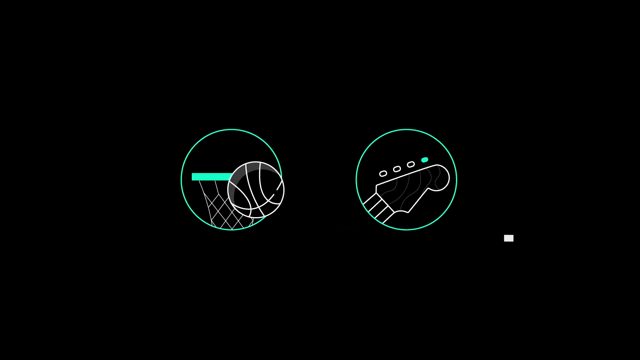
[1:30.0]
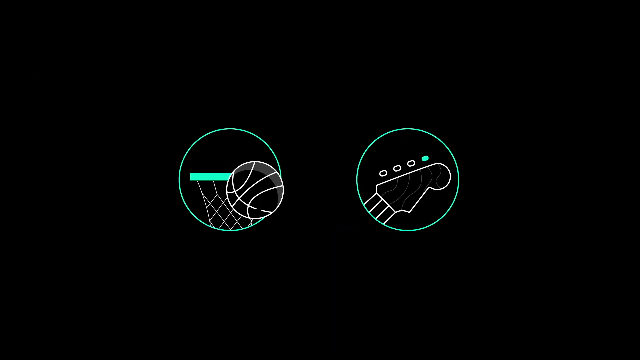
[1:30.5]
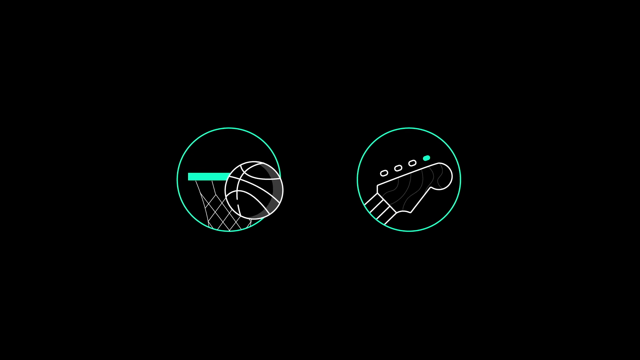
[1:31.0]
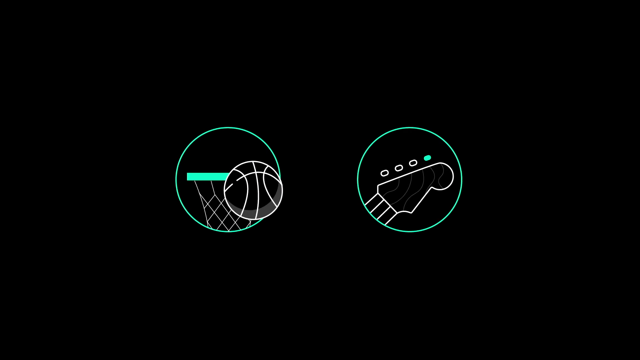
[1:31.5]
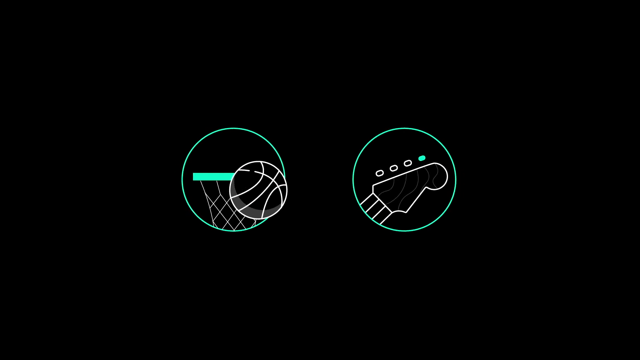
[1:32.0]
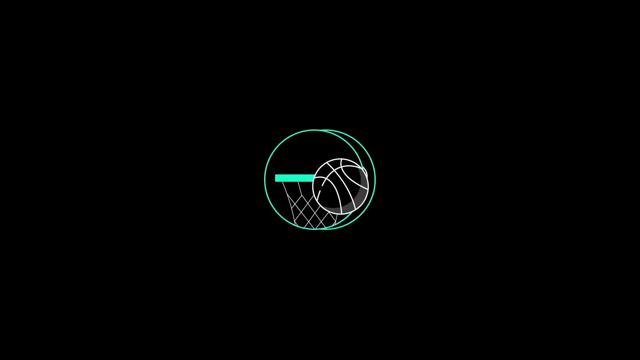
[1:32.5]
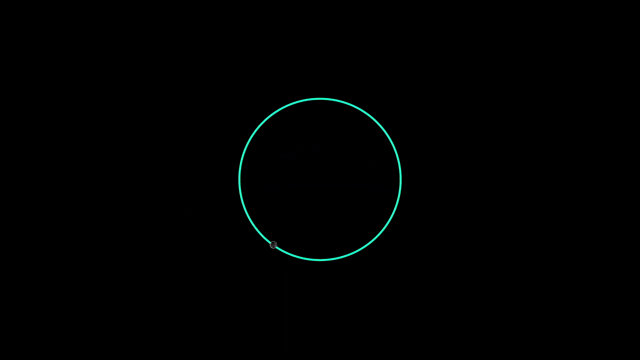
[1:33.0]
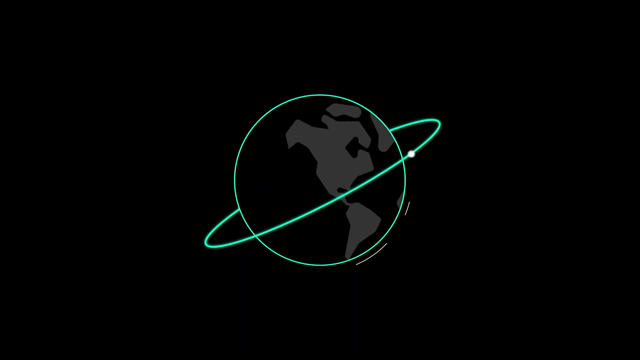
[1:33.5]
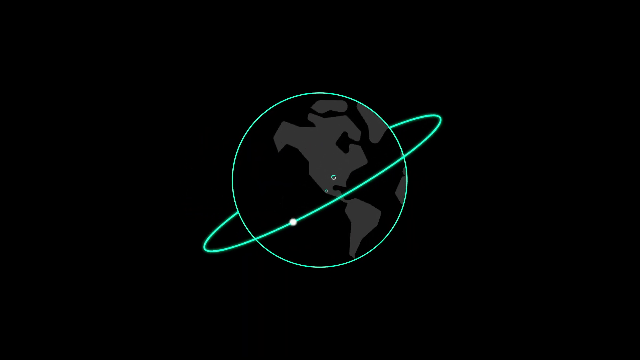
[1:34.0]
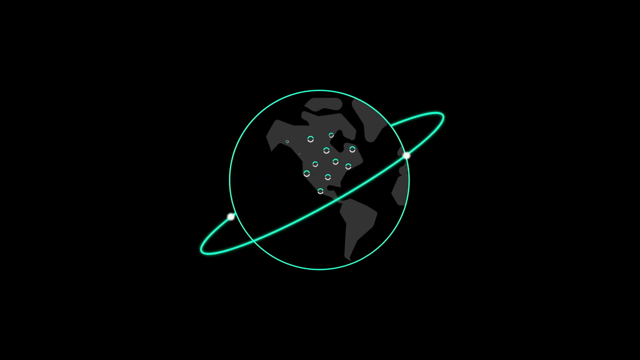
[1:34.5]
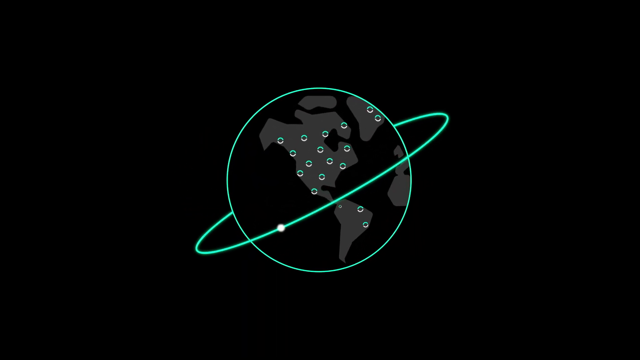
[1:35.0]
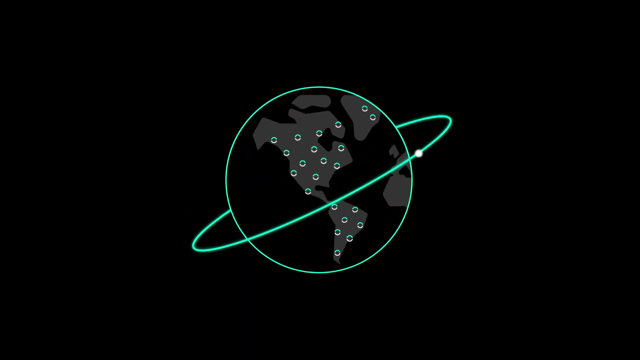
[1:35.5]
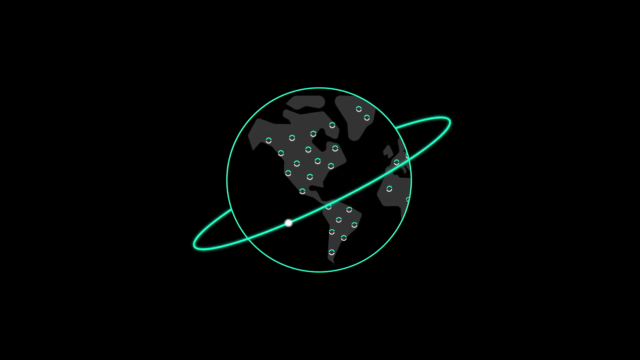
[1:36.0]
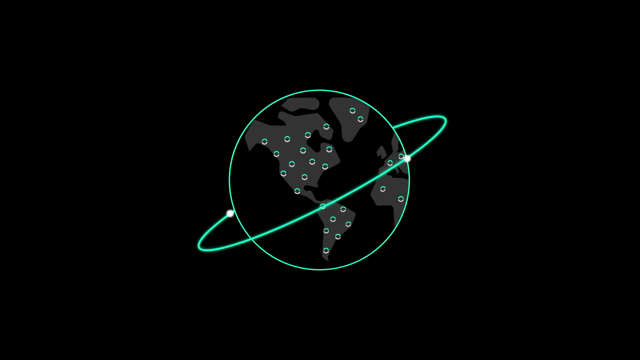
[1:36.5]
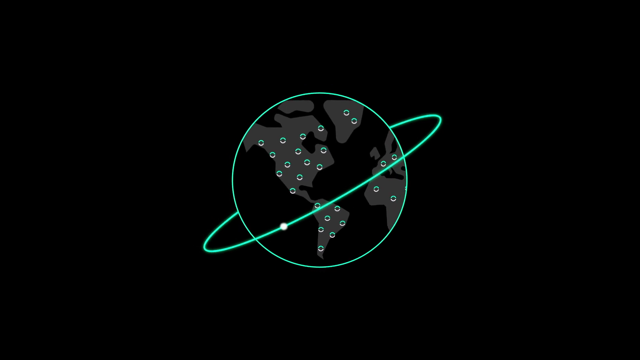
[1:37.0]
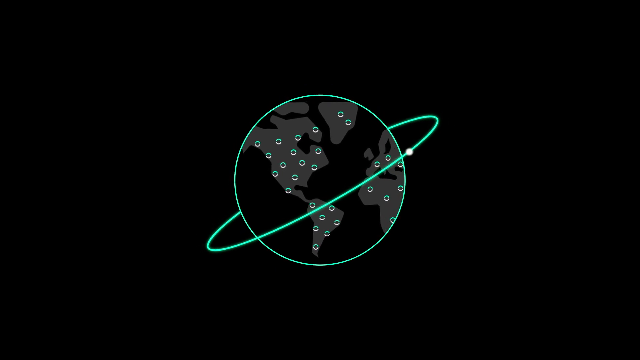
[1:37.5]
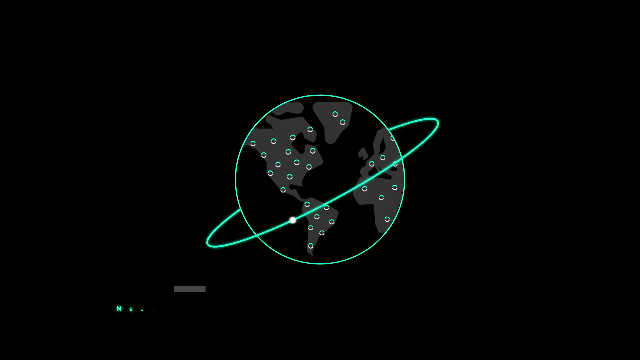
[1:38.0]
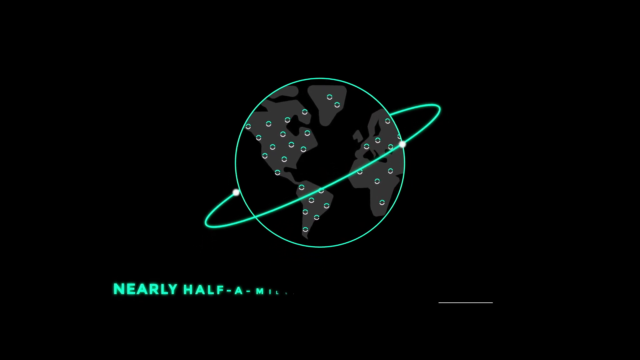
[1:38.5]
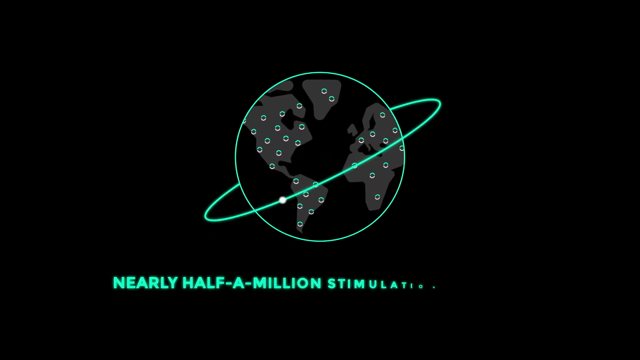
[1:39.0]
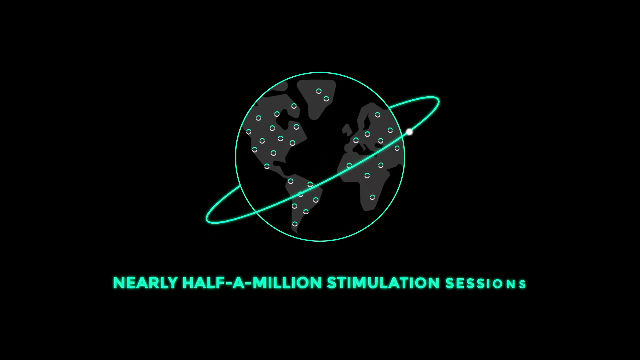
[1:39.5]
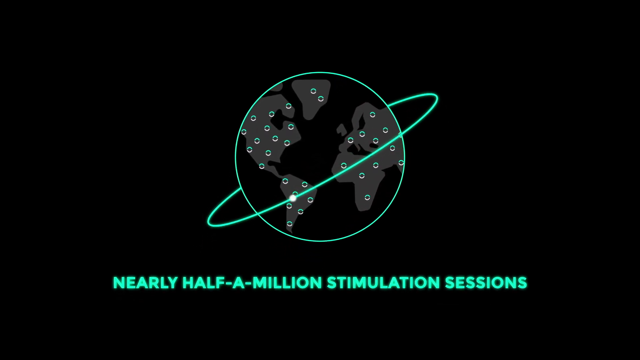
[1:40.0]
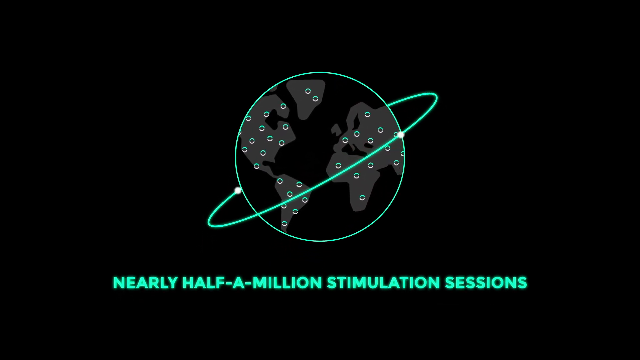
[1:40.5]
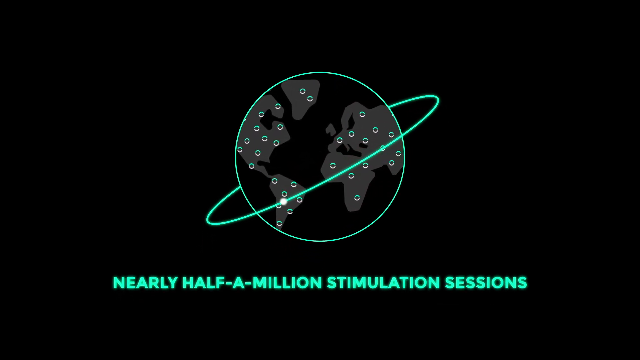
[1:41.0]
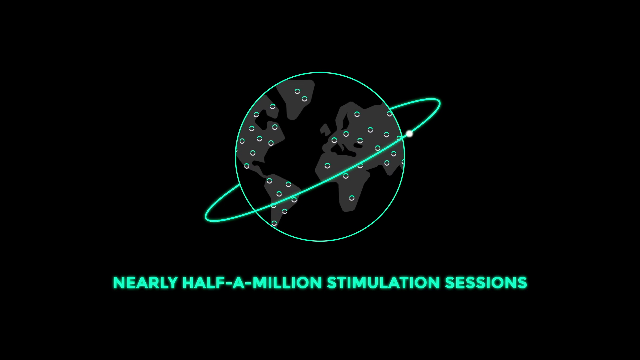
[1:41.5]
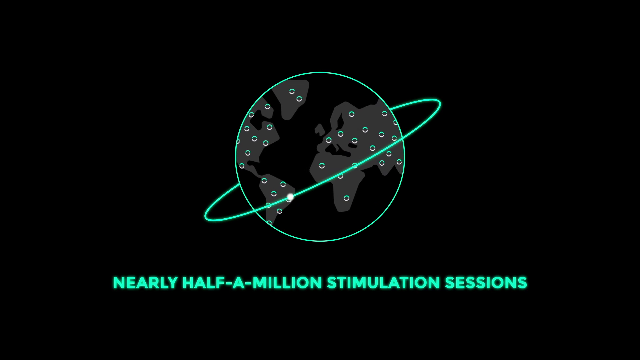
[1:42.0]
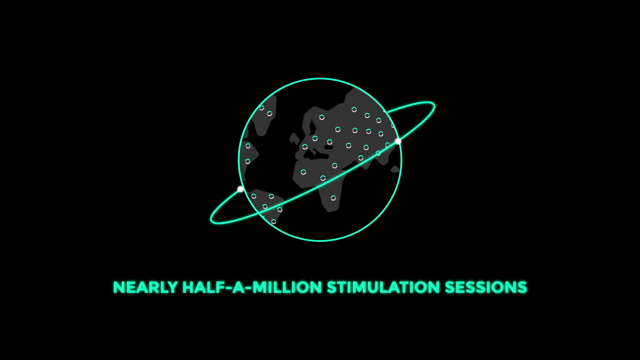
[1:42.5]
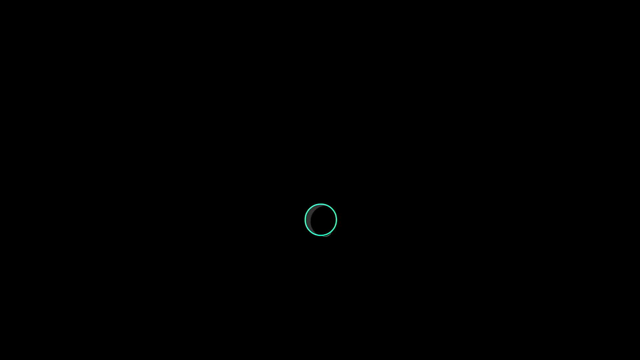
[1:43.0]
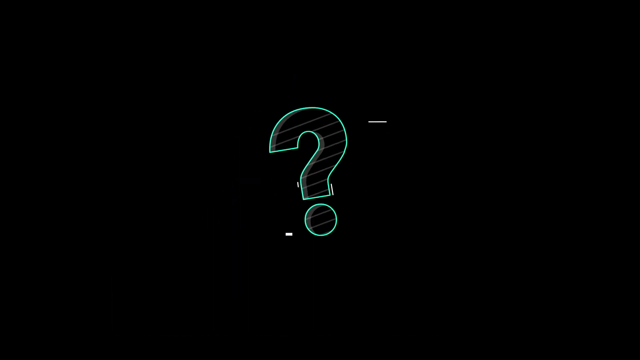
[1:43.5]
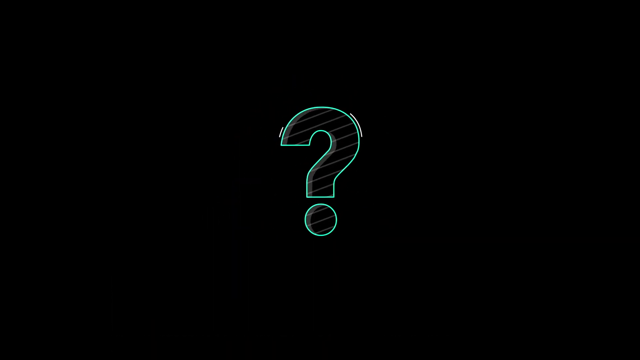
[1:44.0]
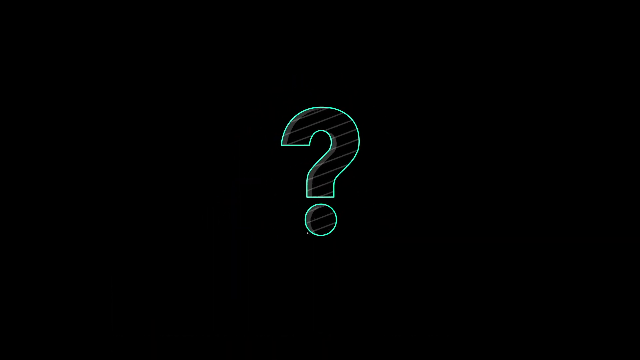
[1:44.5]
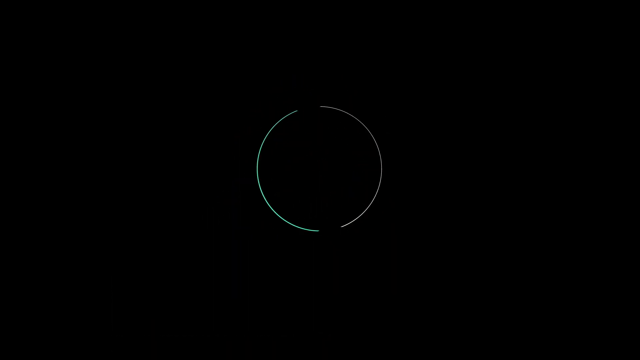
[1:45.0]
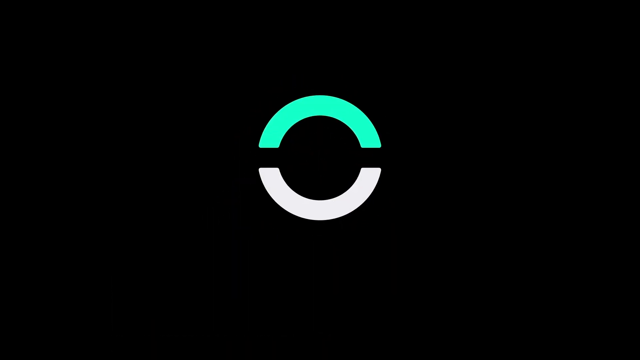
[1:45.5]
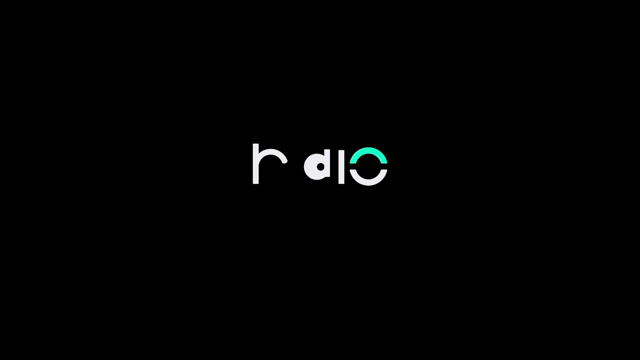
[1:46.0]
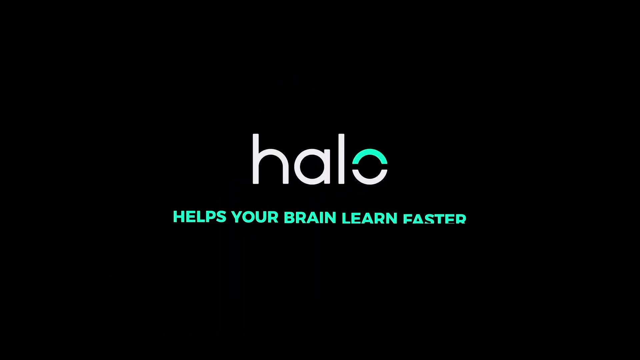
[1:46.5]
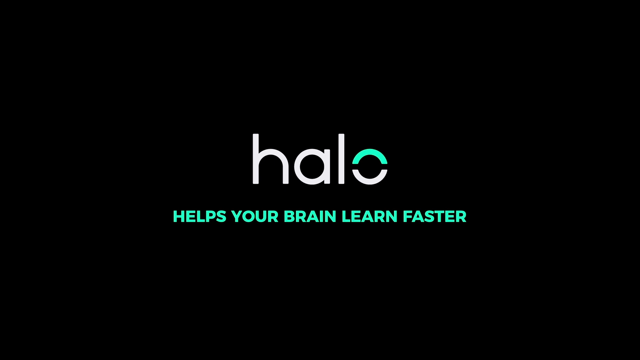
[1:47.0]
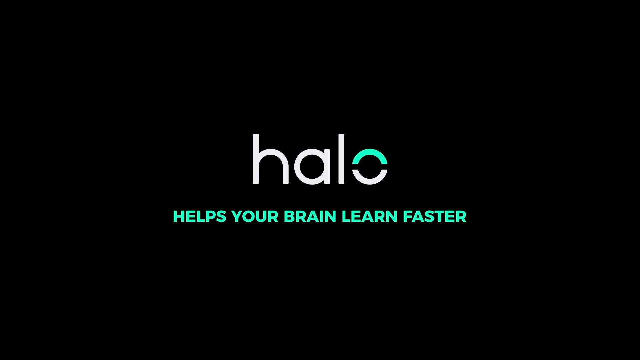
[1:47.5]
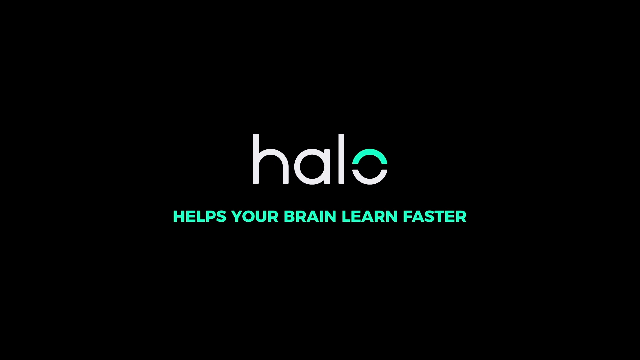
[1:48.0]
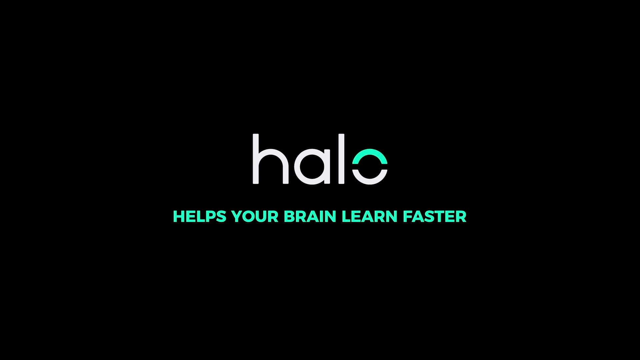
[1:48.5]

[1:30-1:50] On the left side of the screen, a basketball is next to a basketball hoop, and on the right side is a guitar head, the top of a guitar; both are in green circles. The basketball spins in a clockwise direction. The two circles connect, and a globe of the Earth appears with green dots all over the map and a green ring around it with white dots spinning around. Text at the bottom of the screen reads "nearly half a million stimulation sessions." A green-outlined question mark appears, followed by a logo that says "Halo helps your brain learn faster." The video is apparently a promotional video for Halo.